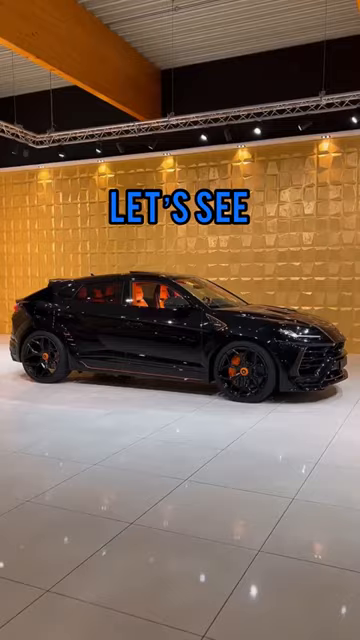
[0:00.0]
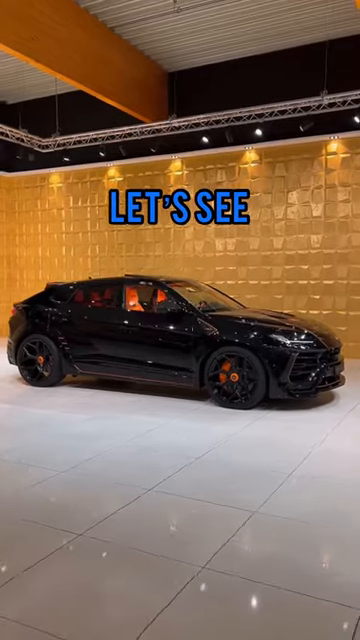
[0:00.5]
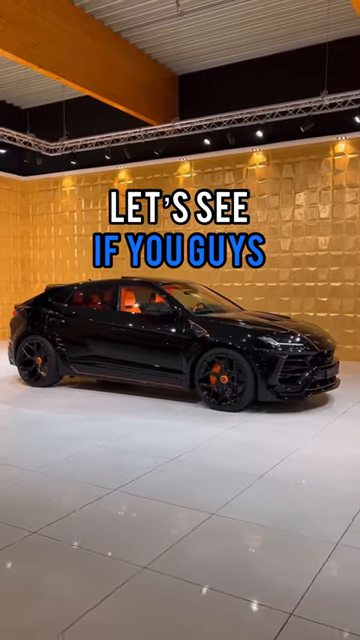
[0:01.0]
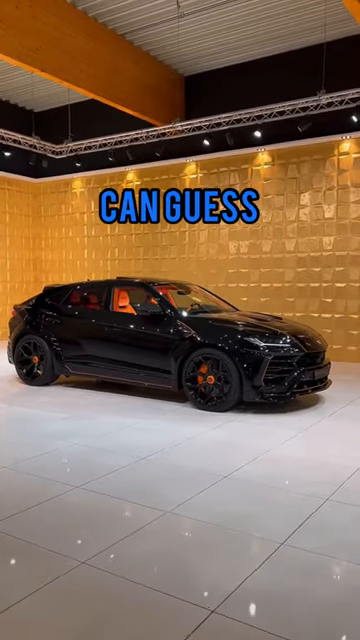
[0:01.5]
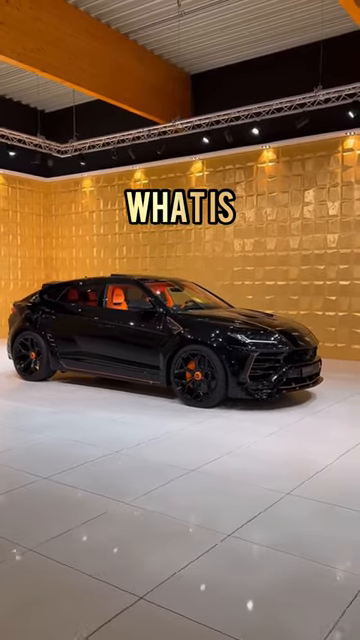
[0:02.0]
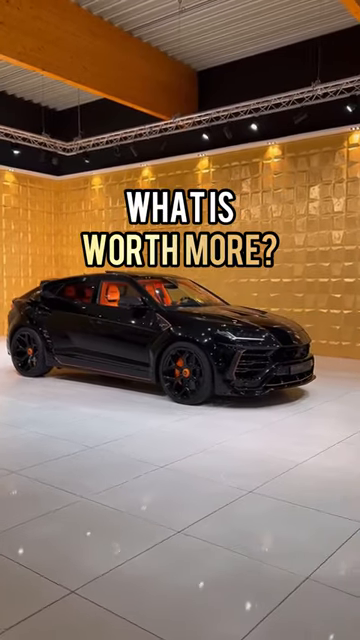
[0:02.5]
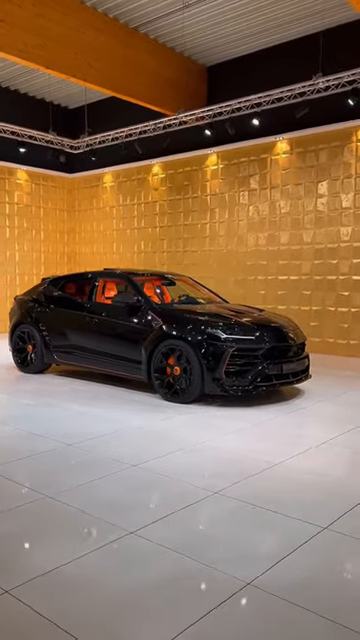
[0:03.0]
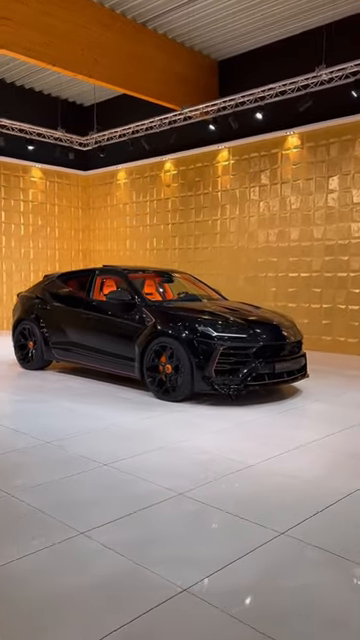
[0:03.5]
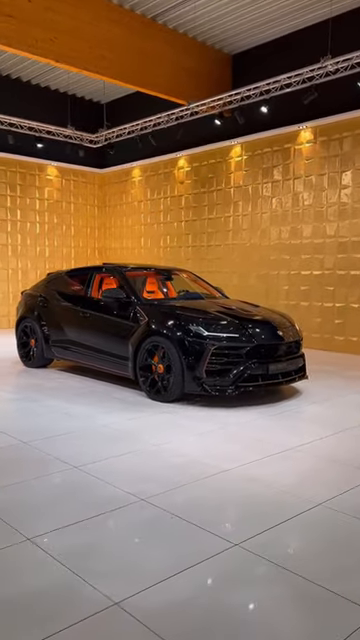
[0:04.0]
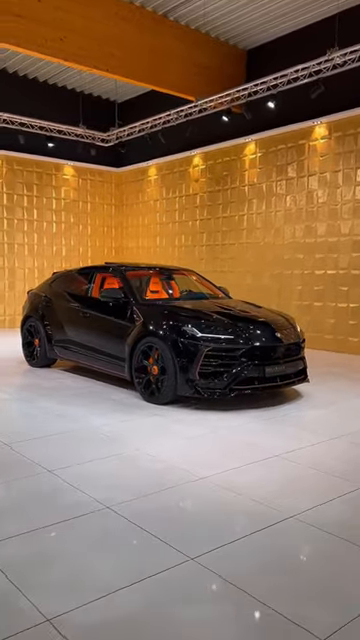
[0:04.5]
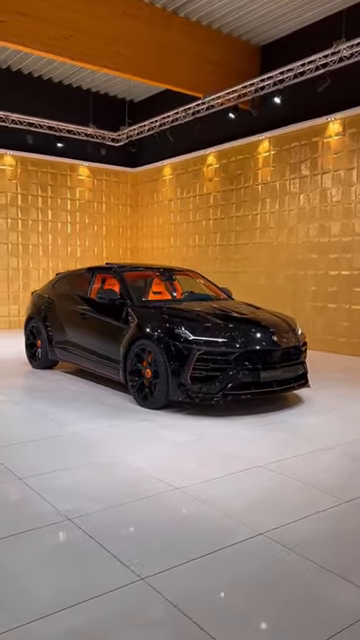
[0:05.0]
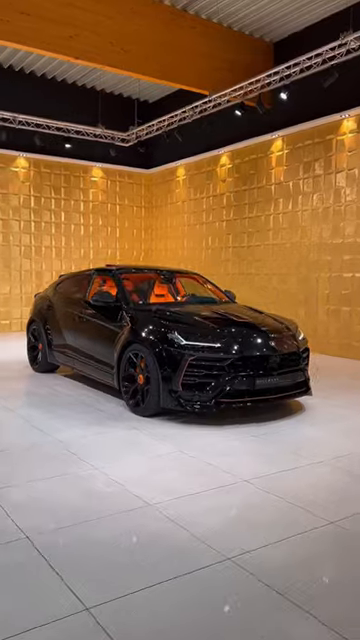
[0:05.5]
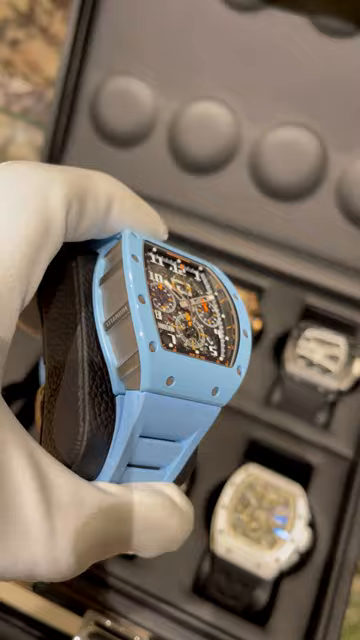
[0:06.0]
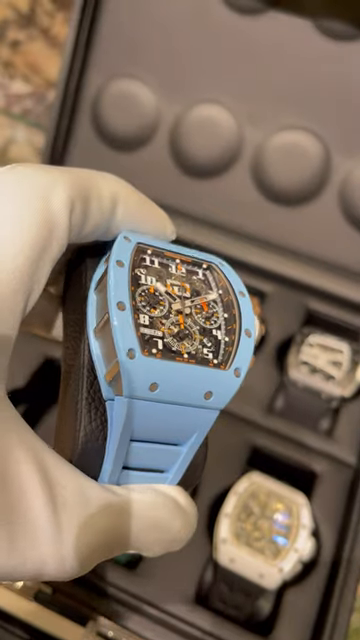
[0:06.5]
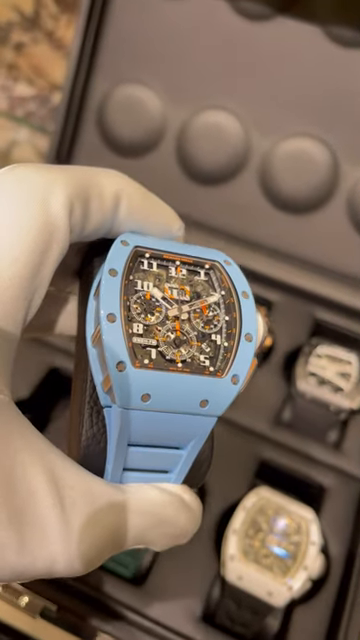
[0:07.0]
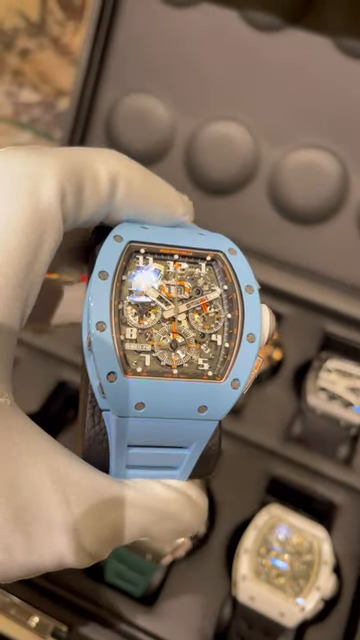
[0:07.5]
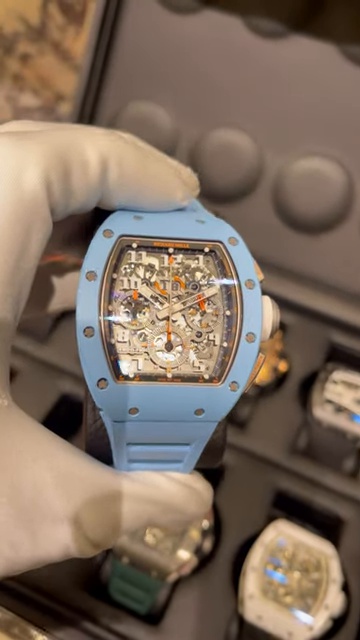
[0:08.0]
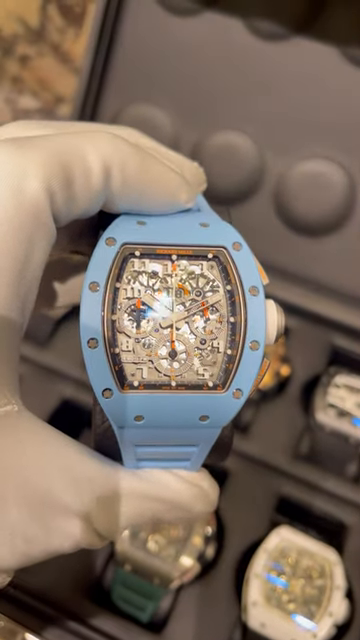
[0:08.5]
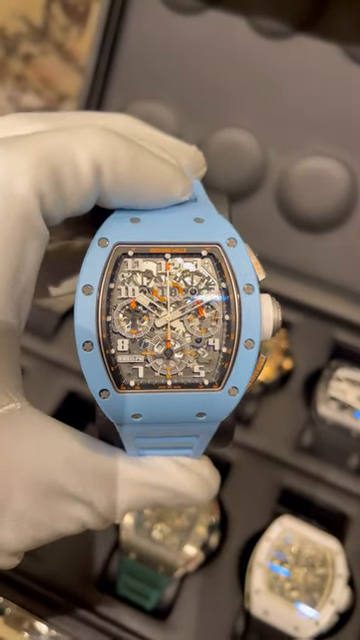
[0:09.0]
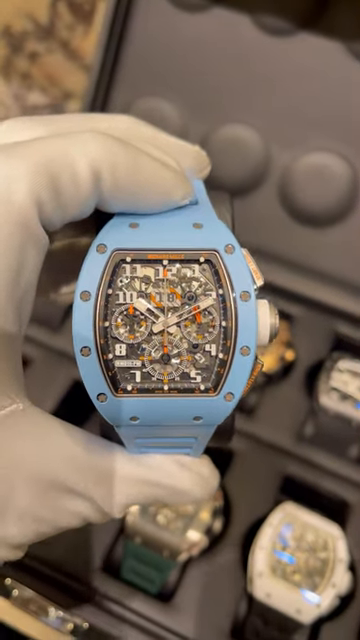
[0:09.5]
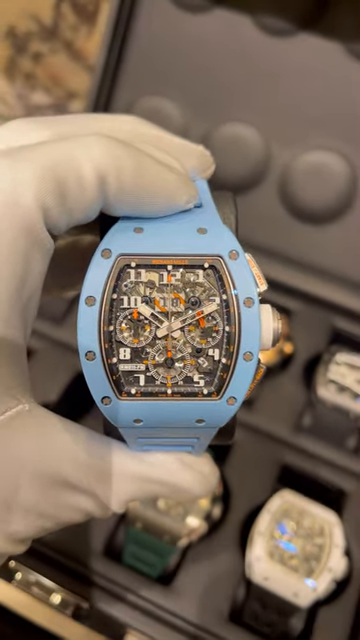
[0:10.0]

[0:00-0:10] The video begins with a black SUV whose interior is orange. Above the SUV is a metal-like structure holding lights, along with a ceiling that is gold and silverish in color. Behind the SUV is a gold wall, and below it is white flooring. Text above the vehicle reads "let's see if you guys can guess what is worth more." After this, a light blue watch with a very intricate design inside appears, held by a man wearing white gloves who displays it toward the camera.